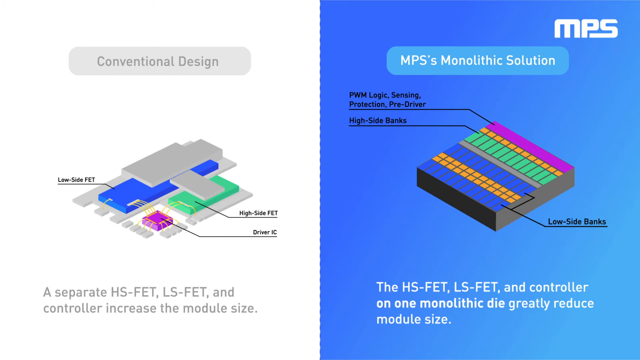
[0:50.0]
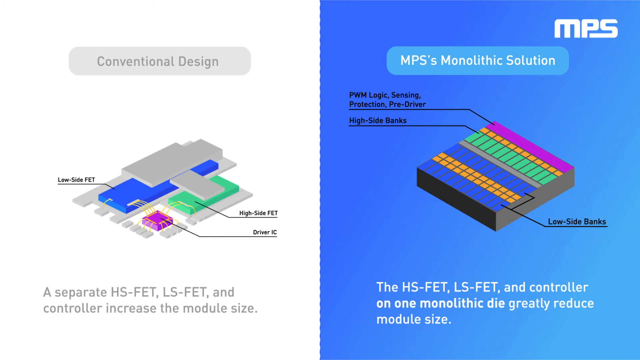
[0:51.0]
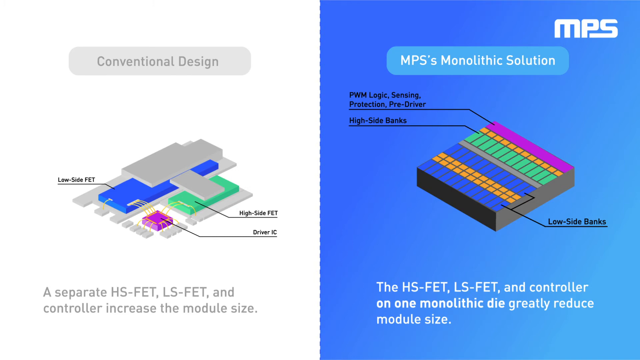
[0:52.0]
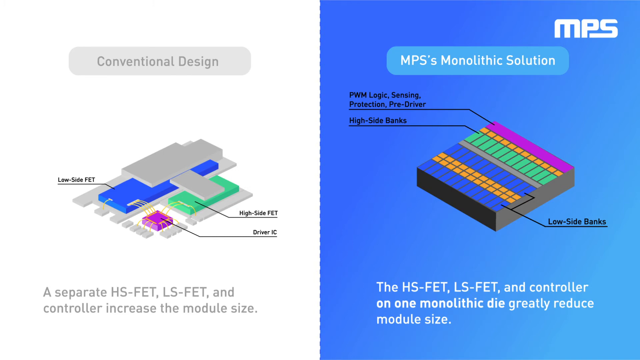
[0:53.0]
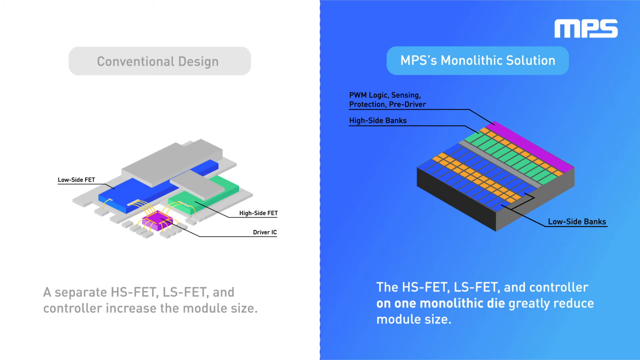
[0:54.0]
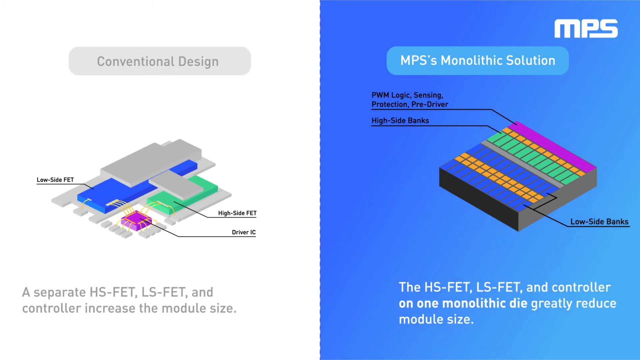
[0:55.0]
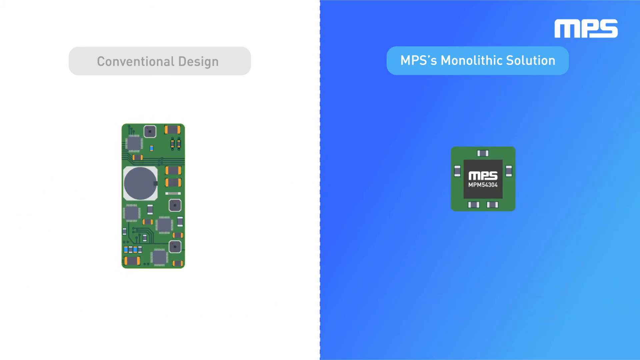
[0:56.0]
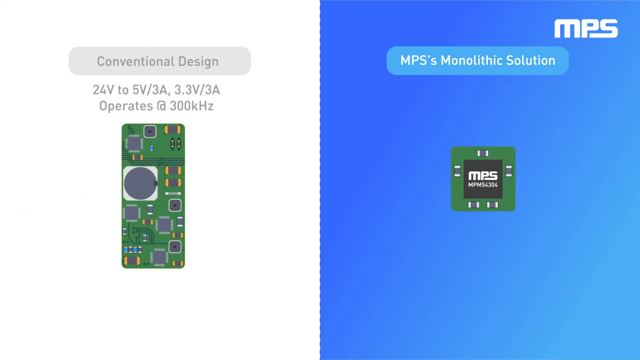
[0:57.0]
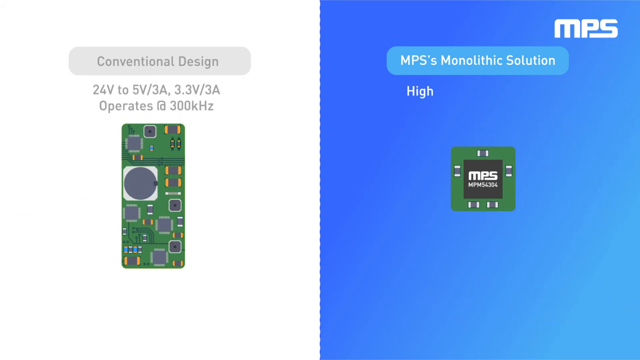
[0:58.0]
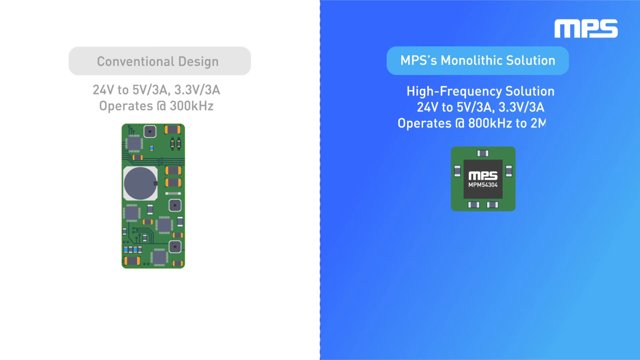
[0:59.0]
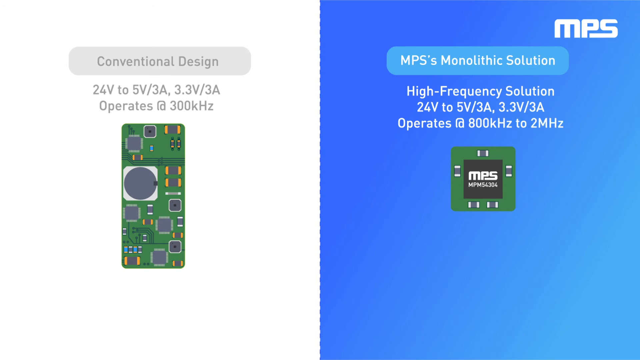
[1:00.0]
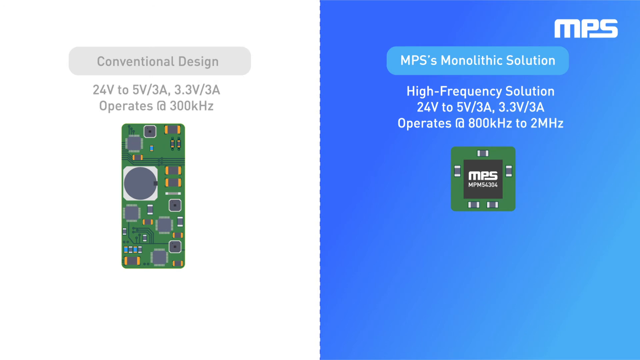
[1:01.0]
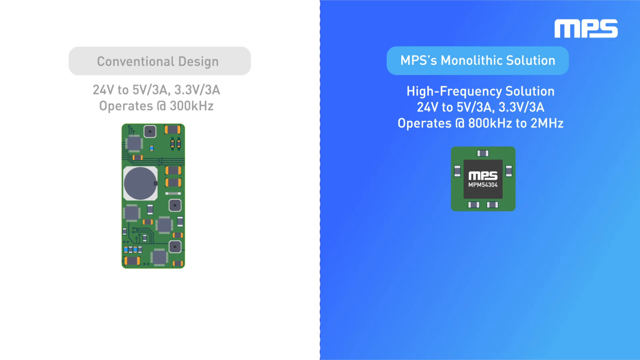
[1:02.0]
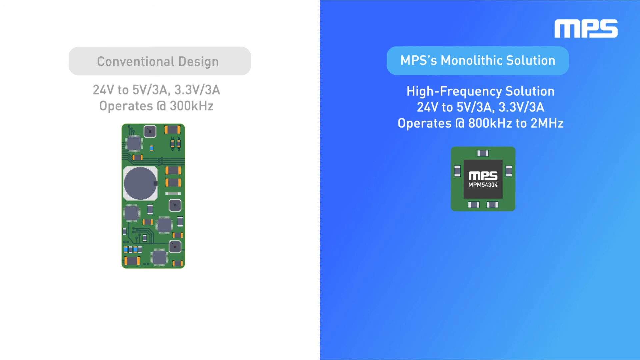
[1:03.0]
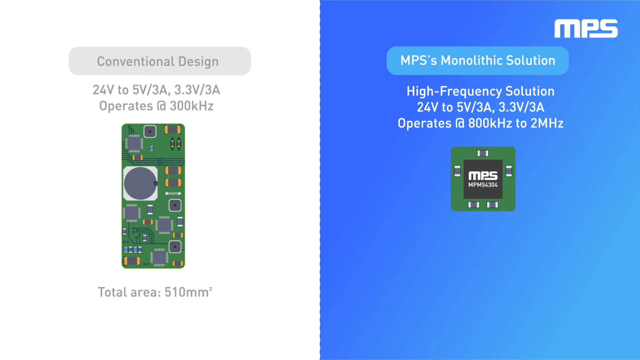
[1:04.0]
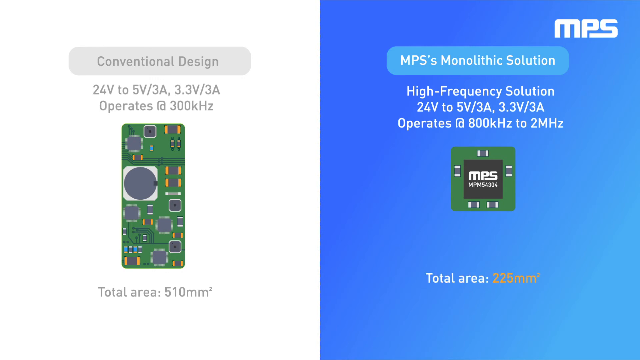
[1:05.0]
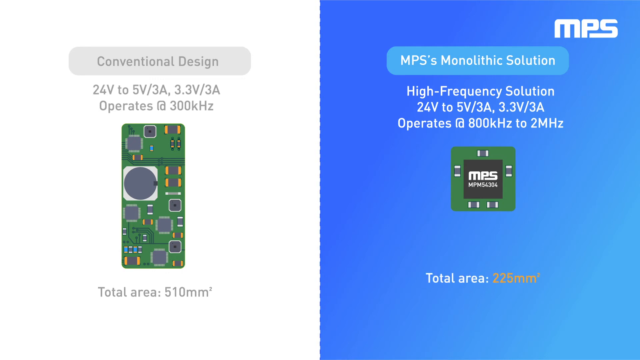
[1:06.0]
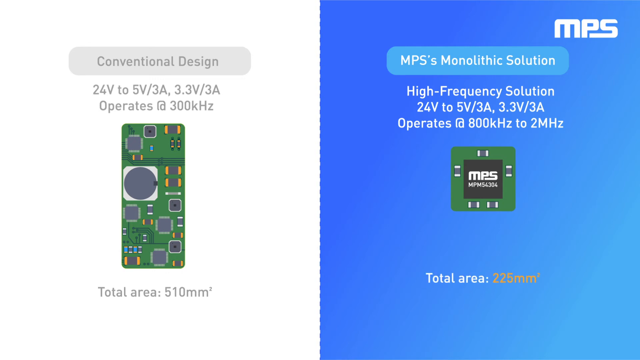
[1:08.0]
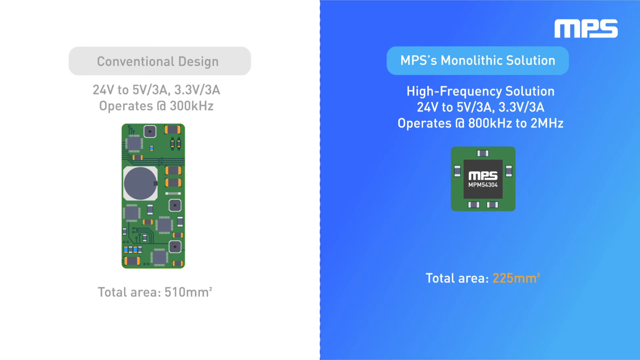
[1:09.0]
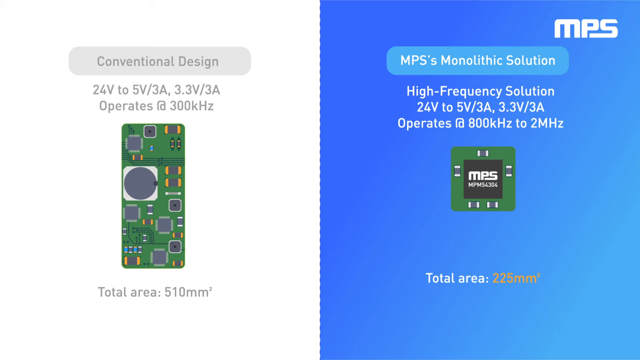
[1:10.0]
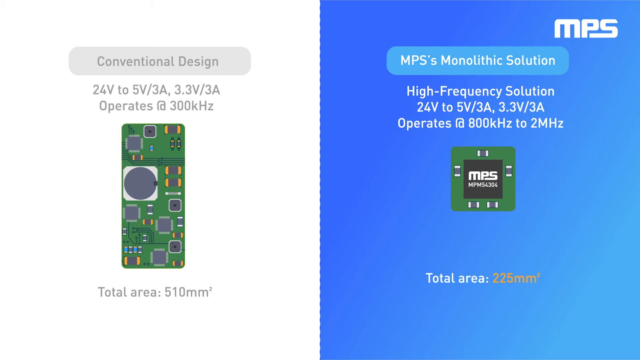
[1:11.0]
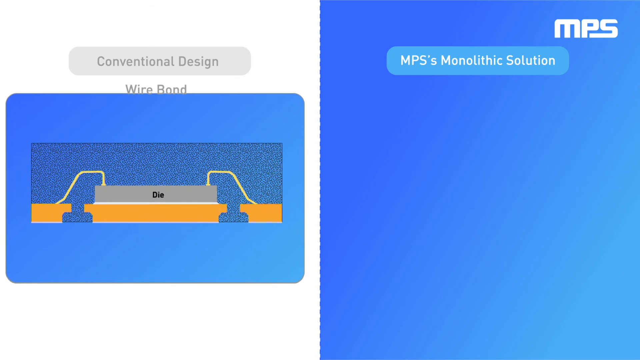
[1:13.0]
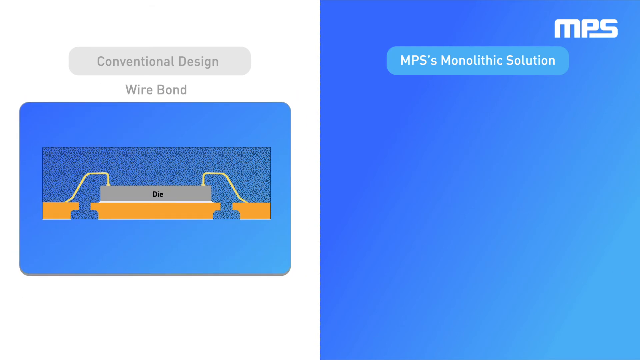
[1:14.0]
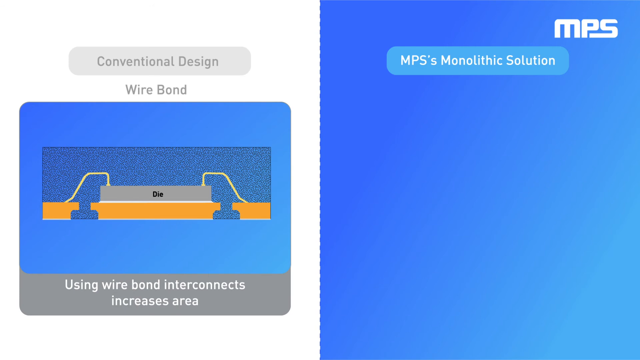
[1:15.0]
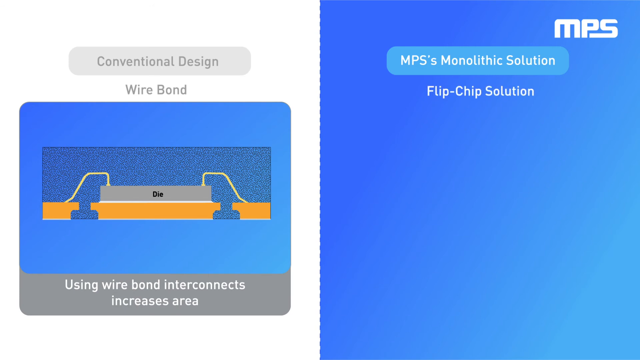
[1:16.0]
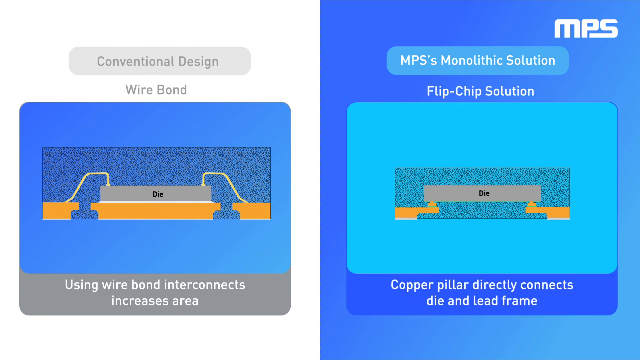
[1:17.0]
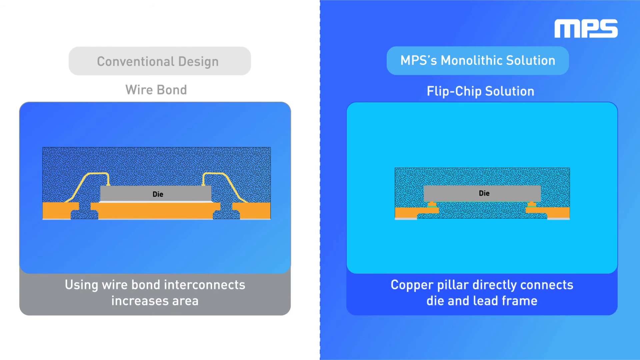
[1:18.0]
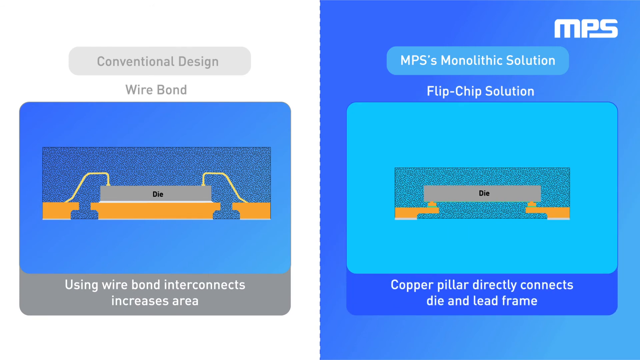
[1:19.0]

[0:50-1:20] The two-sided diagram is now complete, with no more movement: the conventional design on the left and the MPS monolithic solution on the right, with descriptions underneath. The two images are then replaced by two more technical-looking images of the same designs, typical dark green circuit board style diagrams, again labeled above as "conventional" and "MPS monolithic". Additional information about them is shown, including their total area, hertz and voltage, with statistics showing that the MPS solution is less than half the size and more powerful. More diagrams follow, showing that the left side uses a wire bond, which increases the area, while the MPS solution on the right is the flip chip solution, which uses a copper pillar directly connecting the die and the lead frame. The design, theme, colors and illustration style stay the same, with text underneath.